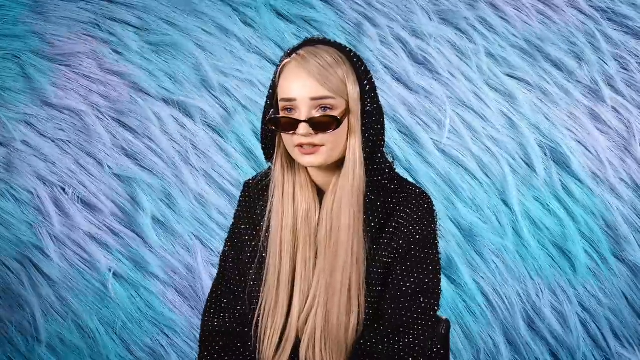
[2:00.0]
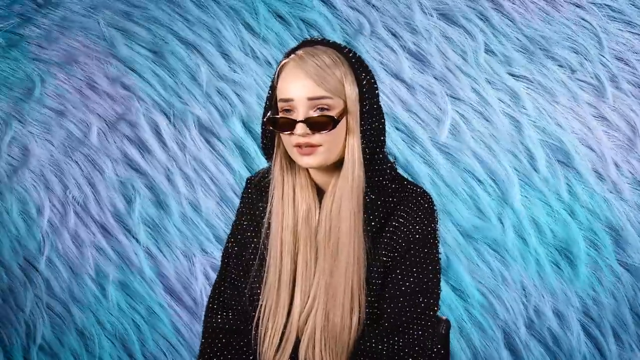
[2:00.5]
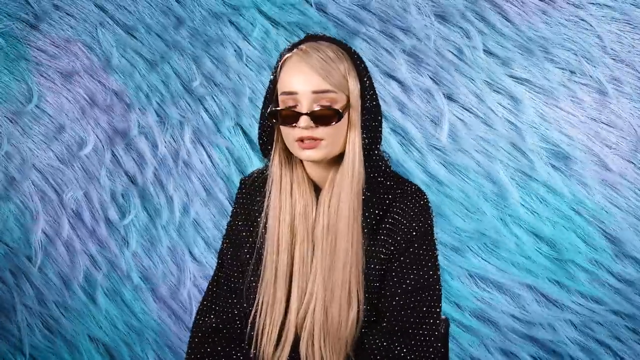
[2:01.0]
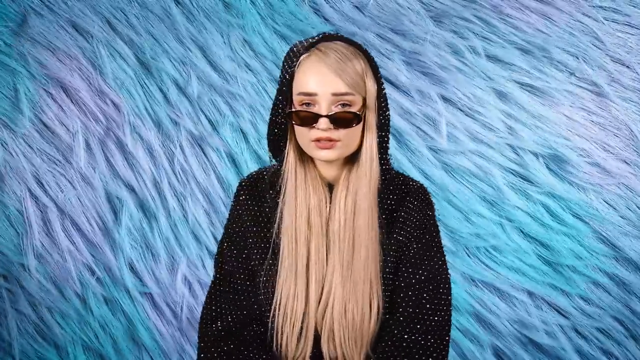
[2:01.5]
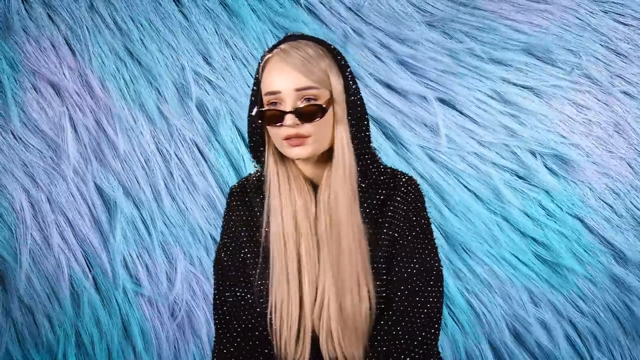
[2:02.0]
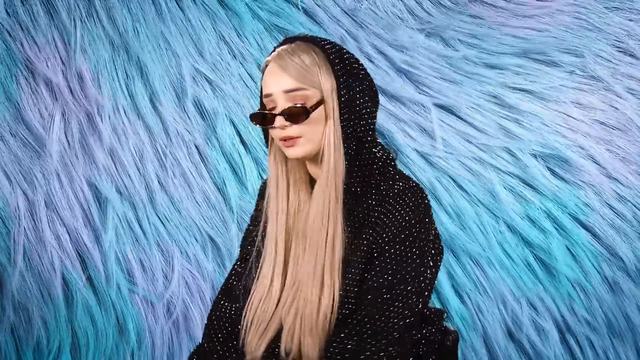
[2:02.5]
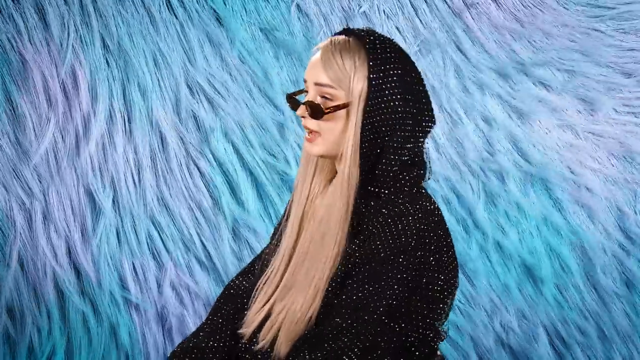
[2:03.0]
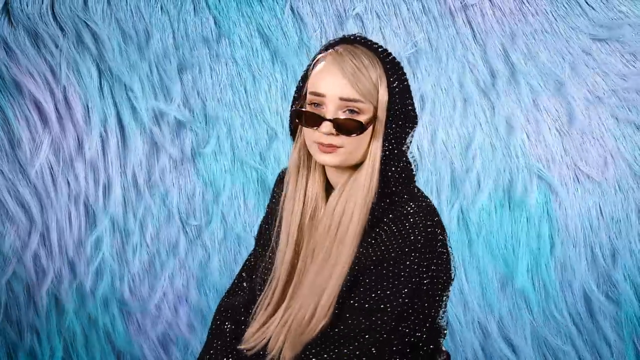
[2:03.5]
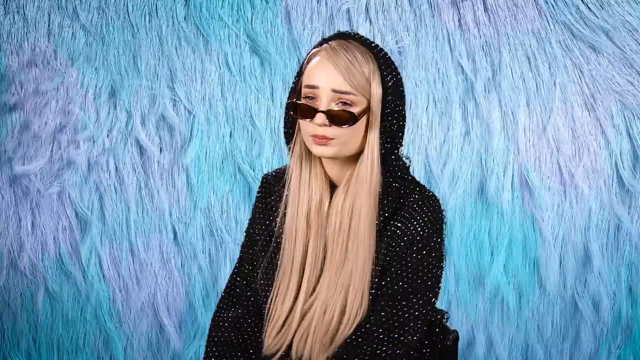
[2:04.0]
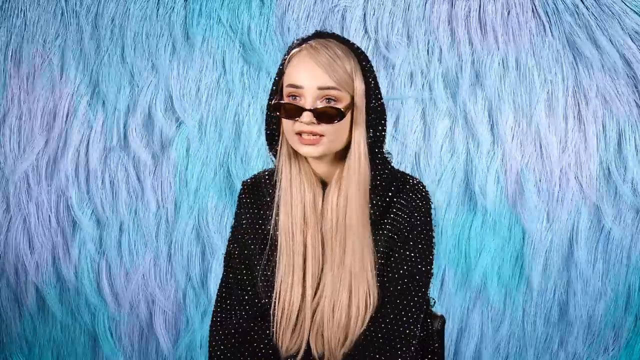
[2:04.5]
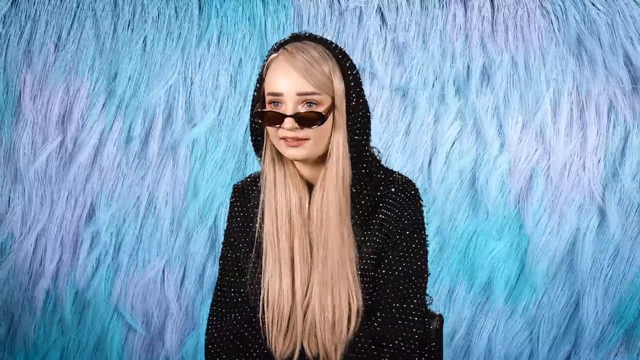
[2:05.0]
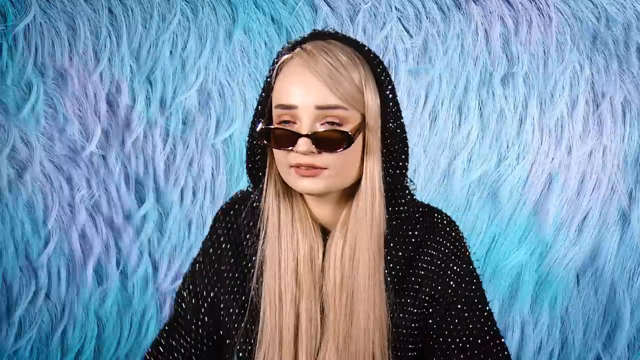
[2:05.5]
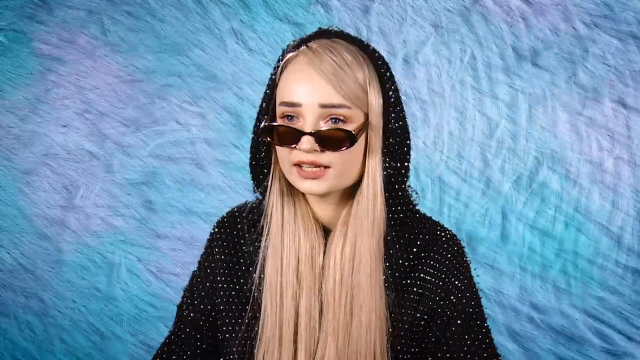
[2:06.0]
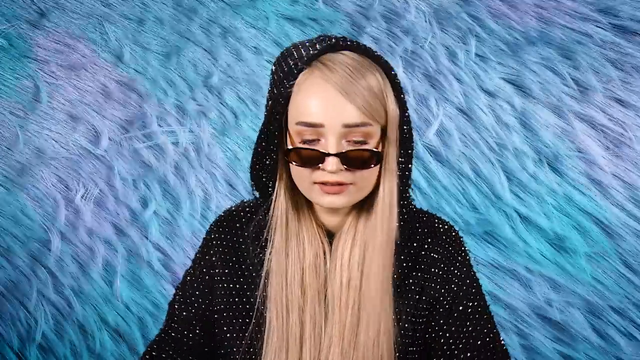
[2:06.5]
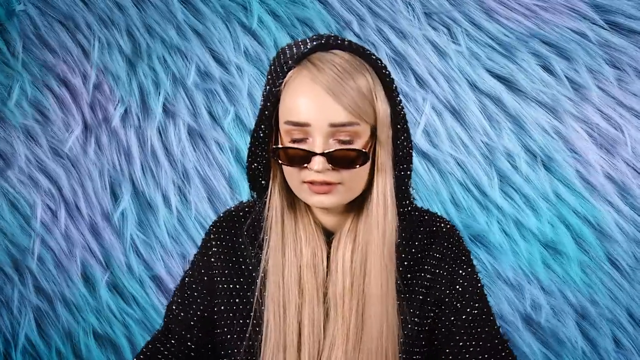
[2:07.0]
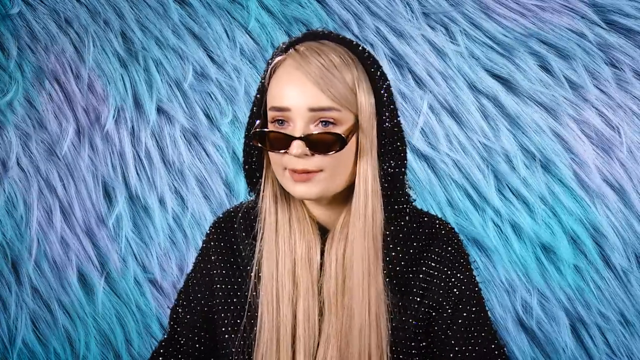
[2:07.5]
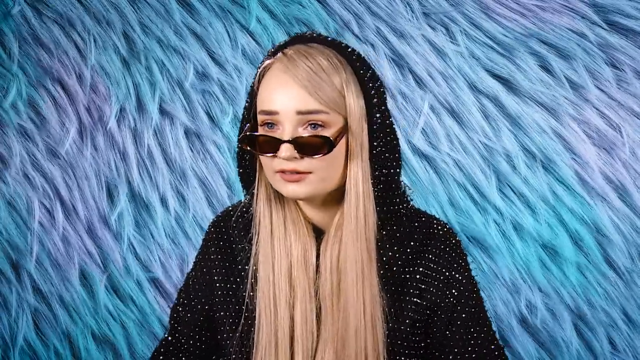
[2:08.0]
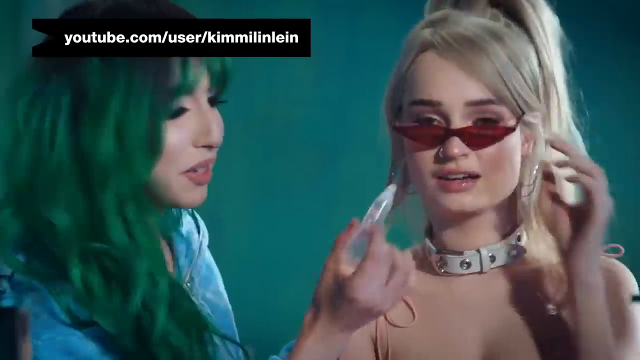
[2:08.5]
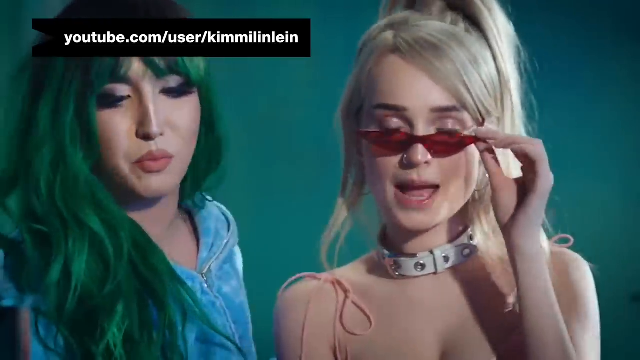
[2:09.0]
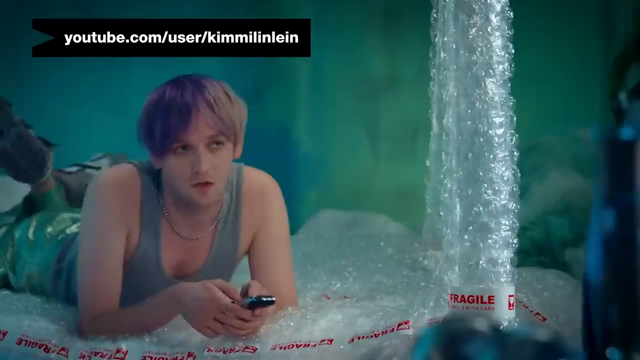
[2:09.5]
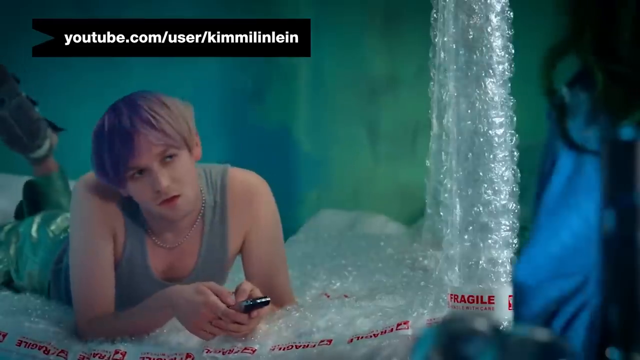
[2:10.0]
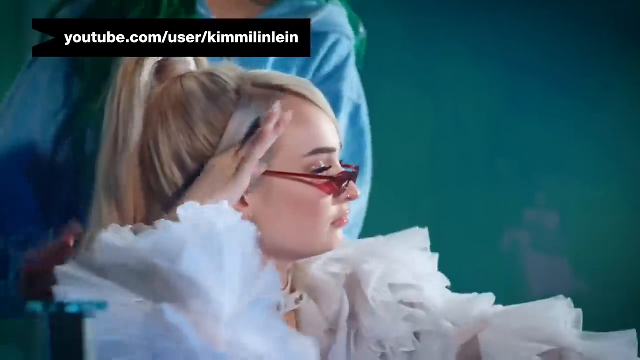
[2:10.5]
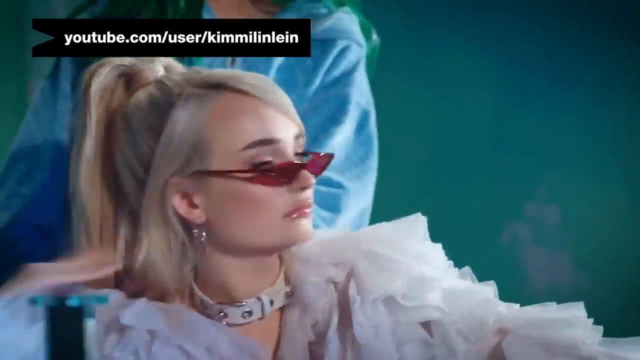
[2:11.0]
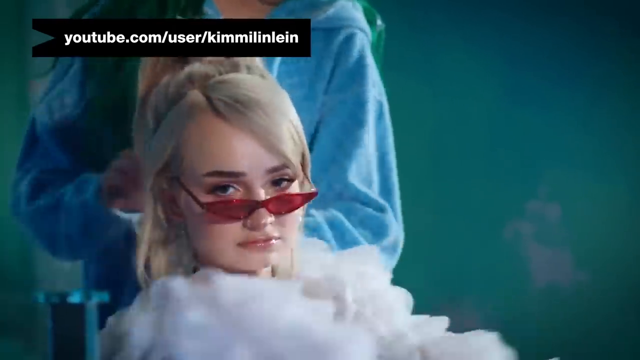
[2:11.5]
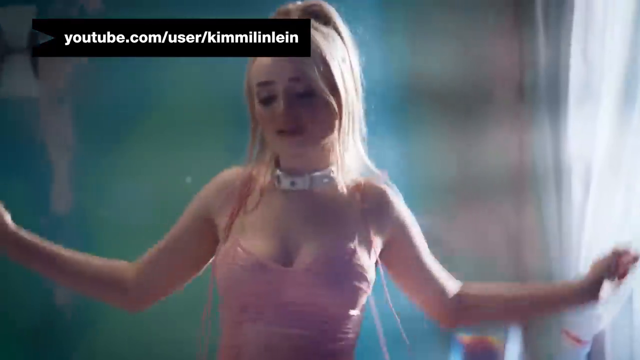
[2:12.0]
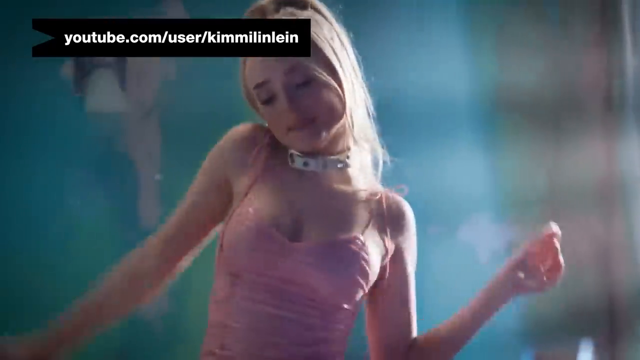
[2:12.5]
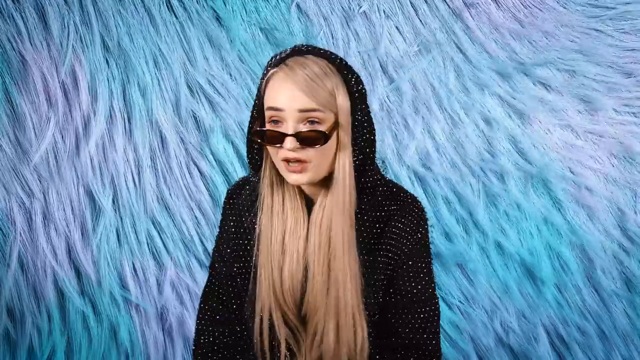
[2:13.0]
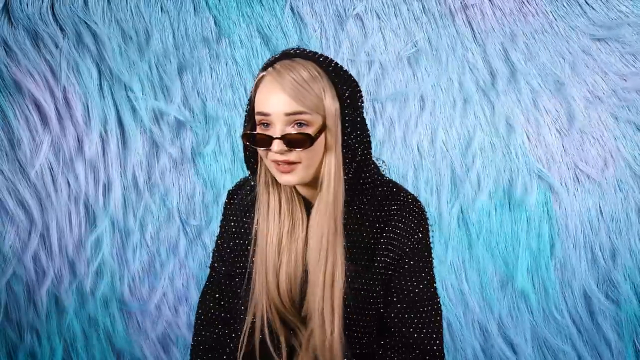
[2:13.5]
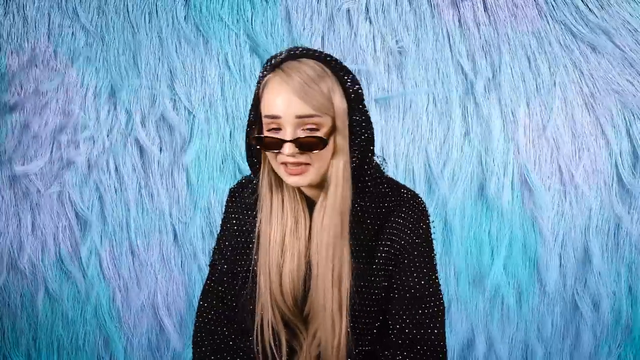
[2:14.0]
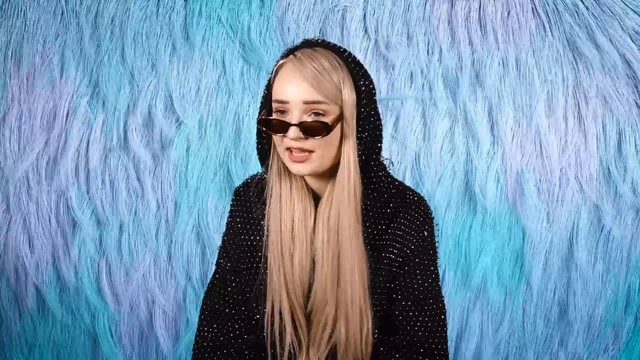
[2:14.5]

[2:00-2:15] A person with long blonde hair parted to their left (the viewer's right), wearing brown sunglasses and a black sequined hoodie with the hood pulled up, appears in front of light blue and light purple artificial fur that moves as if wind is blowing on it. The video changes to the same person having lip gloss applied by another person with green hair wearing a blue hoodie. The blonde person has her hair up and wears red sunglasses; she looks into the mirror and presses her lips open and closed a couple of times. She has a silver nose ring on her nostril.